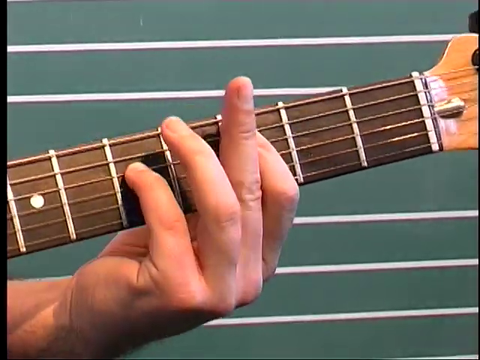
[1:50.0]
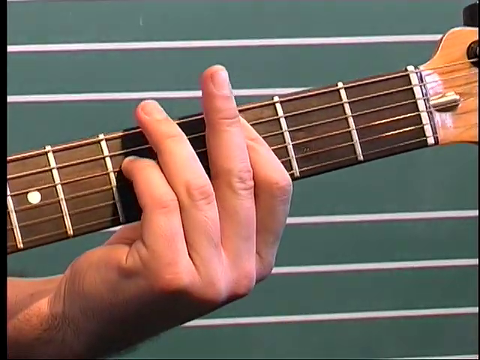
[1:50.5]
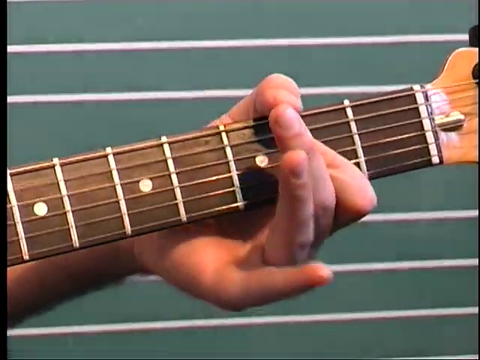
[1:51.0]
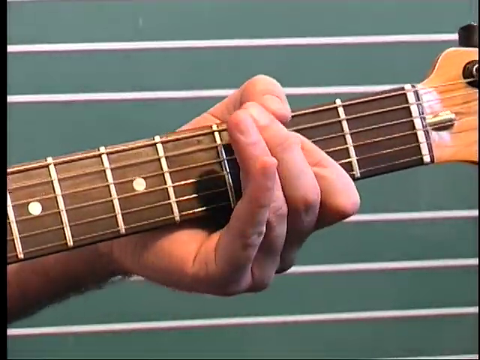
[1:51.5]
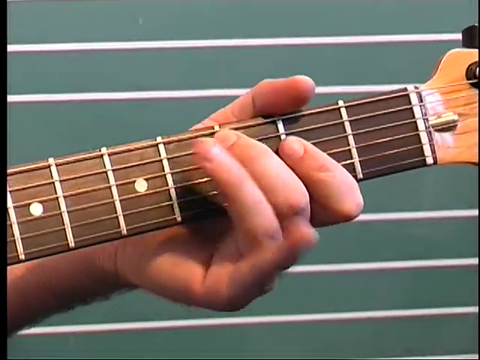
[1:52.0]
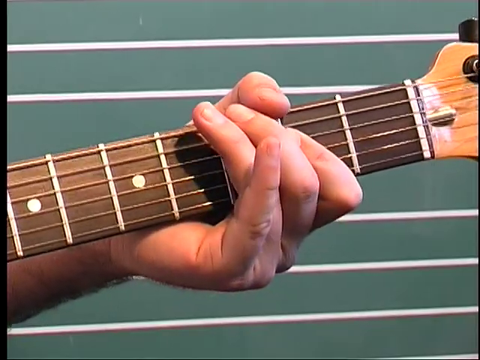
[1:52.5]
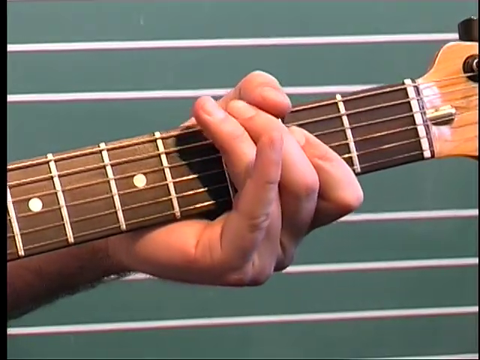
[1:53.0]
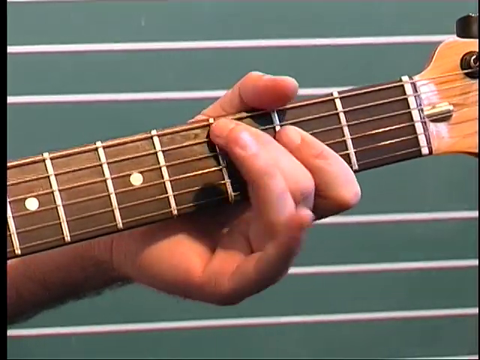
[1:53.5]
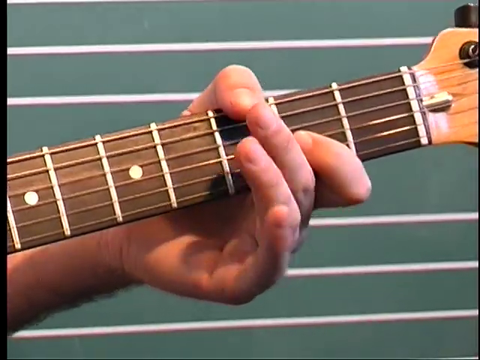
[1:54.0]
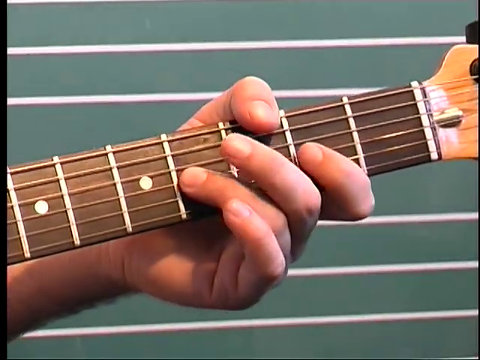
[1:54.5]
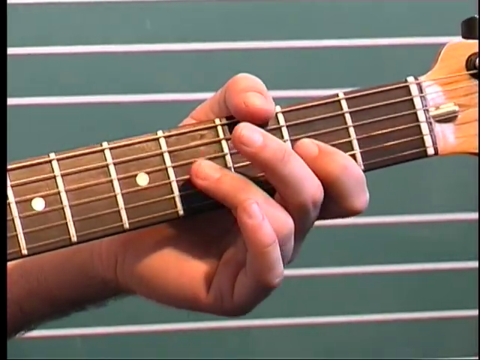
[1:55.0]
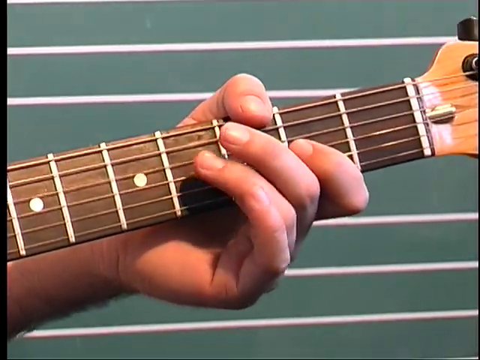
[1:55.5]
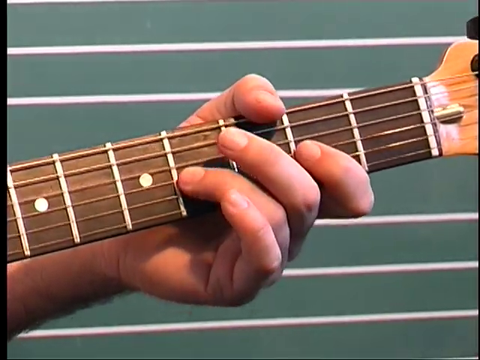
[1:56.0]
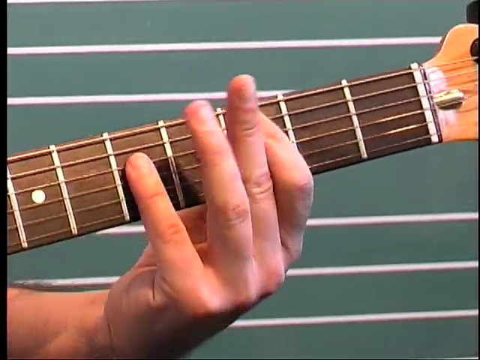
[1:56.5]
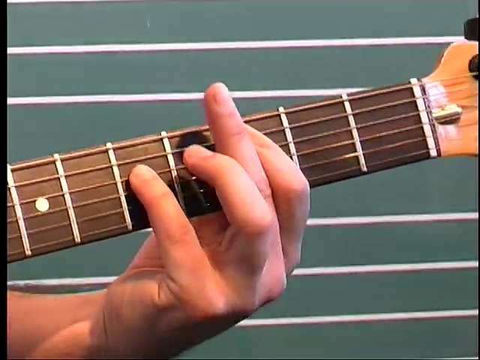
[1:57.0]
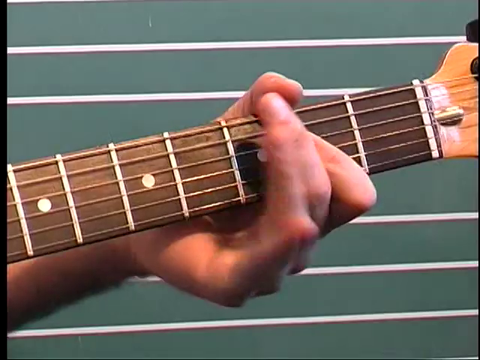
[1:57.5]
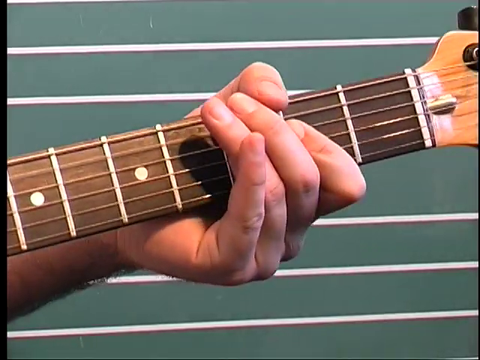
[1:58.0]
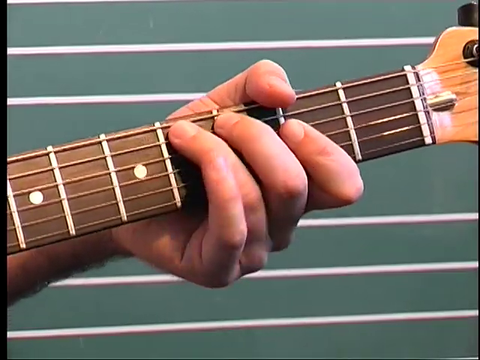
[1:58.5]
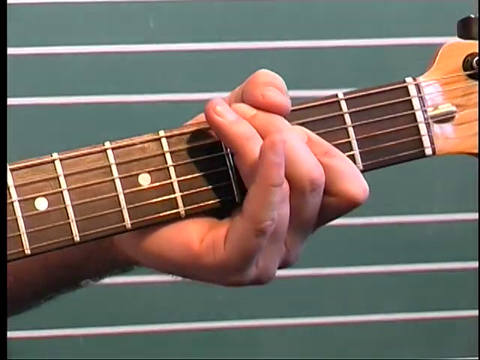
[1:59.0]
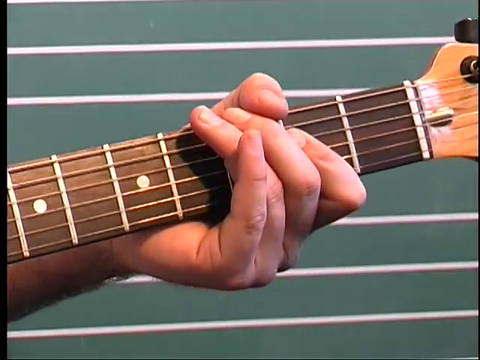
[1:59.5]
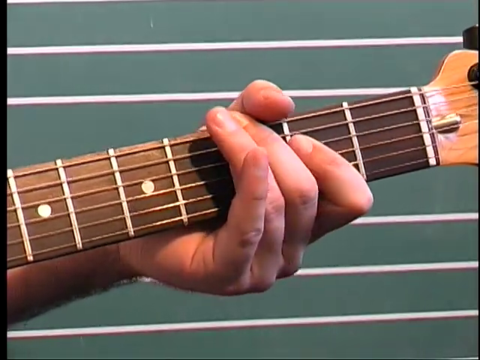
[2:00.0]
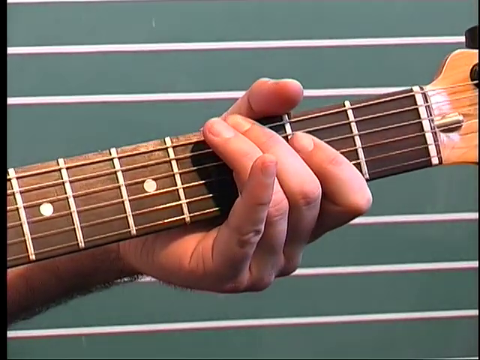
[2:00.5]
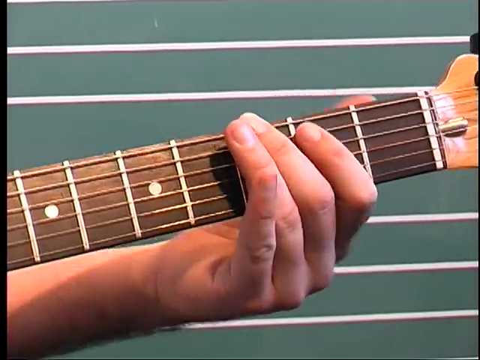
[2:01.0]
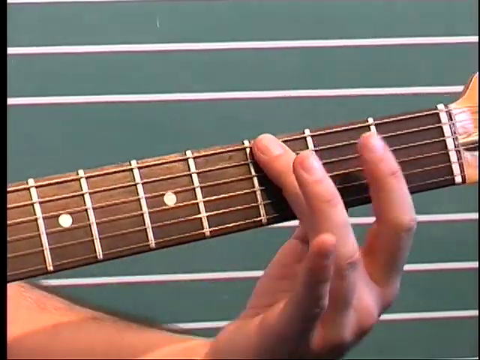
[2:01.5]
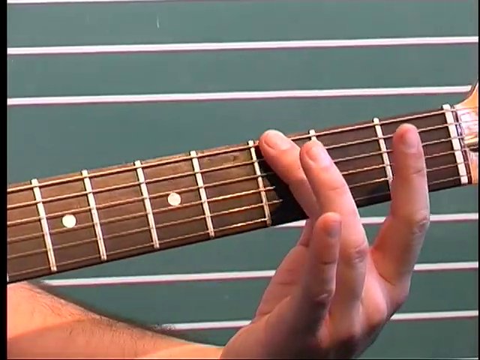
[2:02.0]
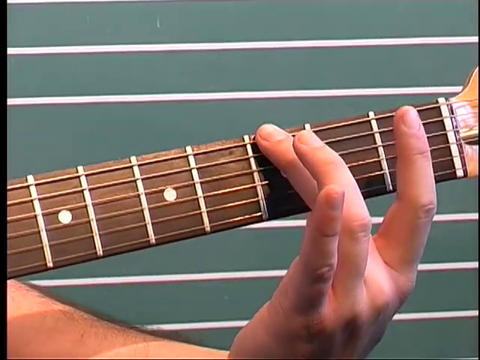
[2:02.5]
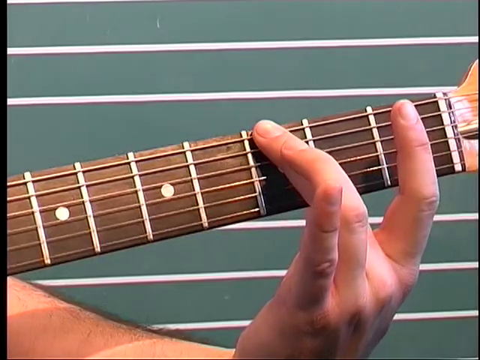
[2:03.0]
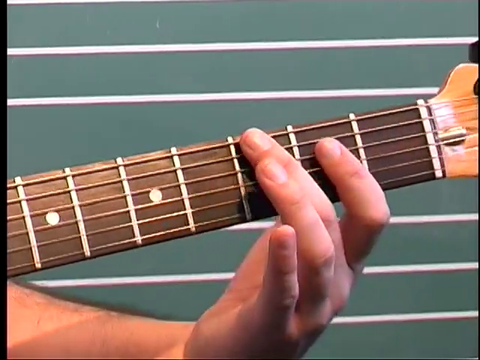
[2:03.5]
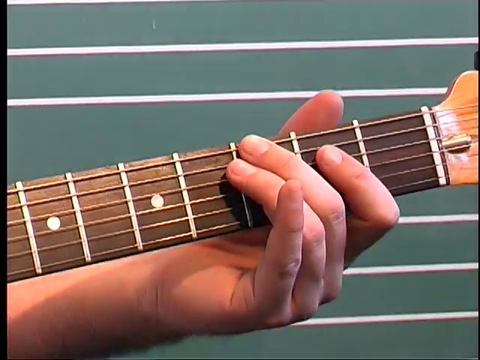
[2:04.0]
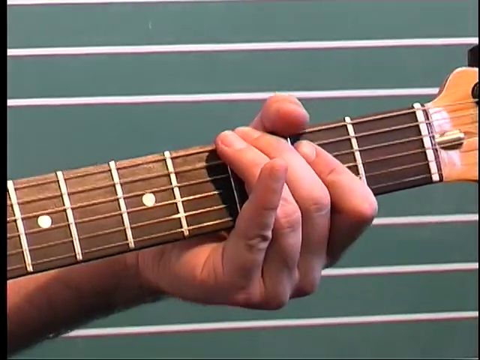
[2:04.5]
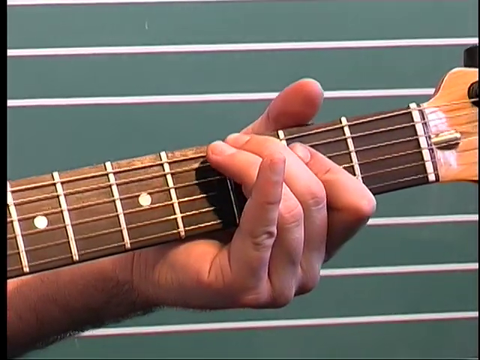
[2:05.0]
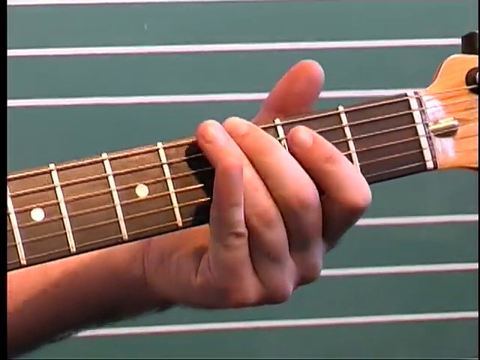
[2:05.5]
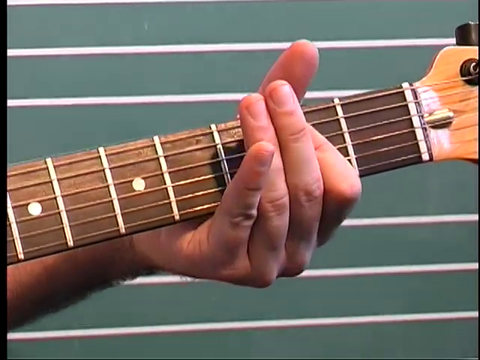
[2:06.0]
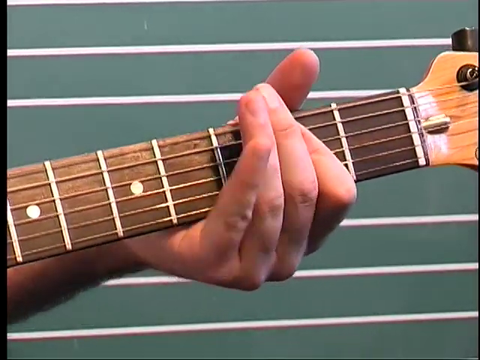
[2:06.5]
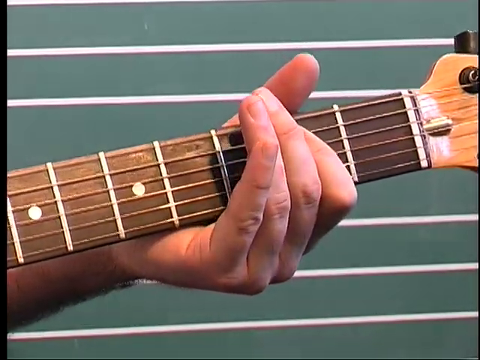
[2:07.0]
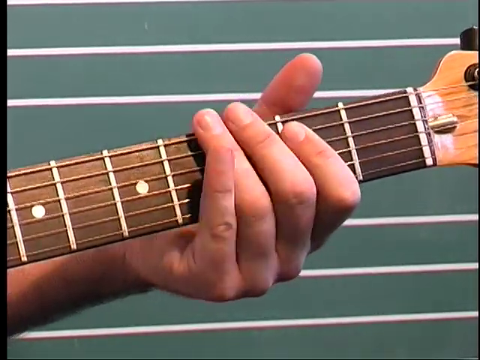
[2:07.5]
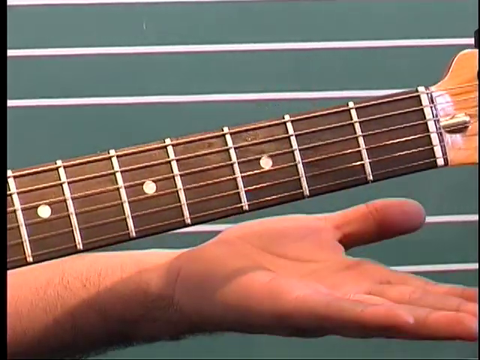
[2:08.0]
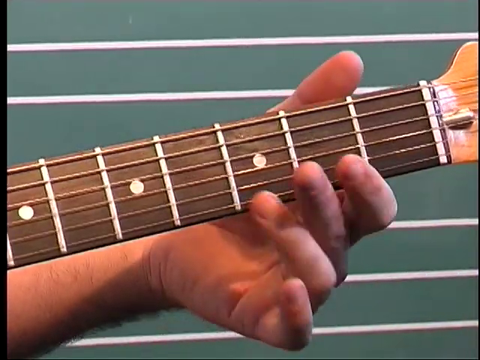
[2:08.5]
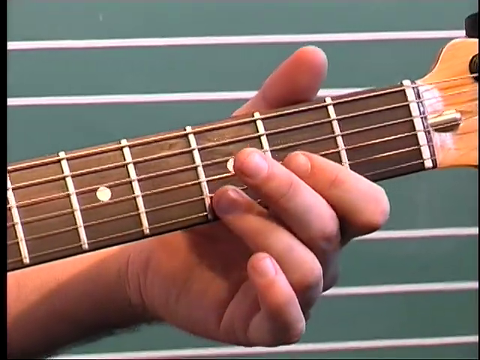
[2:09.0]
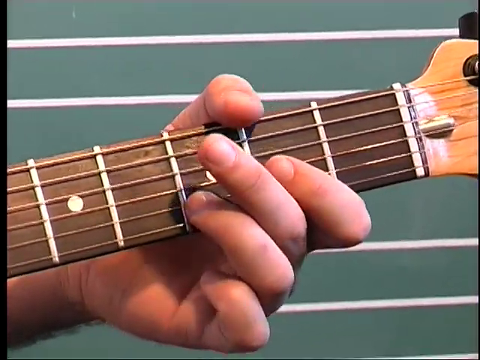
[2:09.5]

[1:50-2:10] A close-up shows someone's hands playing the guitar, focusing on the hand pressing the strings on the long, narrow neck. All five fingers, thumb to pinky, are used as they tap gently on the guitar. The index finger and thumb wrap around almost the very end of the neck, while the other three fingers wrap around the bottom of the neck in a tapping motion as the thumb and index finger hold down the top string and the fourth string from the top. The player then holds down the third string from the top with the pinky, a bit lower on the neck, and moves the whole hand to the right, closer to the top of the neck, continuing to hold the first and third strings down while the other fingers tap. Next the middle finger lies somewhat across the whole neck, covering all the strings, and then holds down the top string while the index finger holds down the second string from the top. The player carefully shows, somewhat slowed down, which strings to press as the camera zooms in.